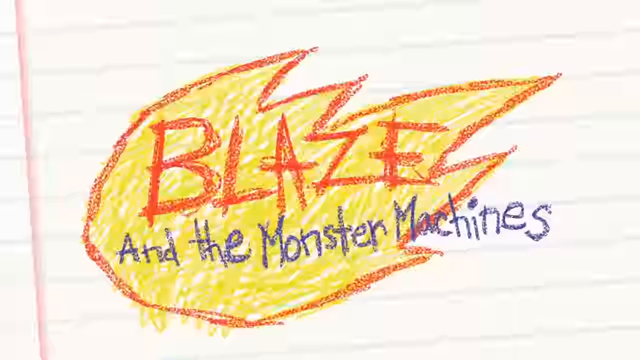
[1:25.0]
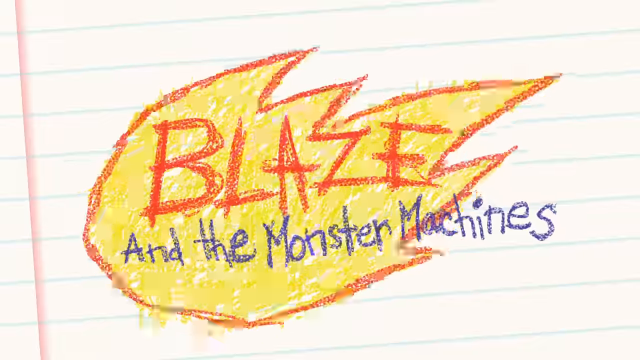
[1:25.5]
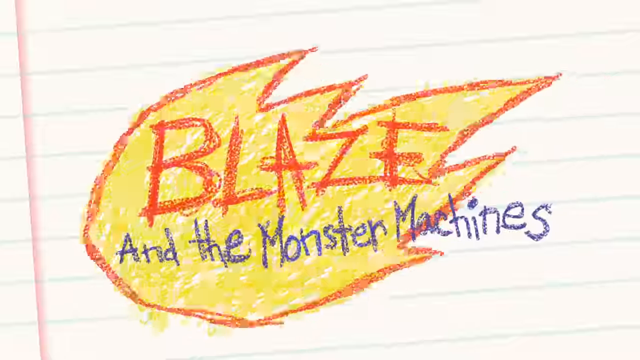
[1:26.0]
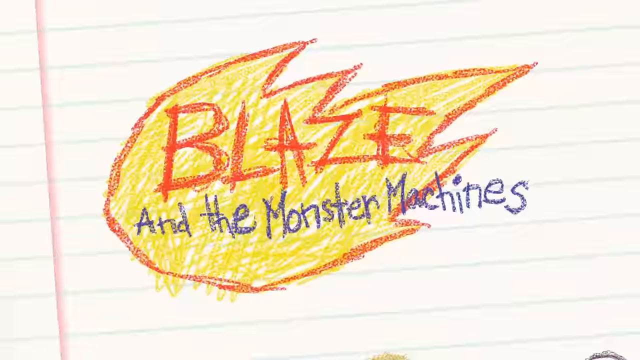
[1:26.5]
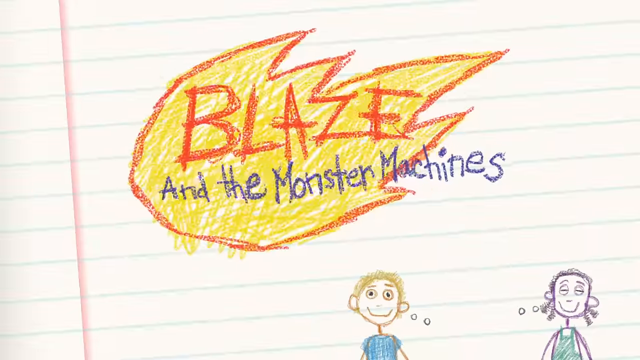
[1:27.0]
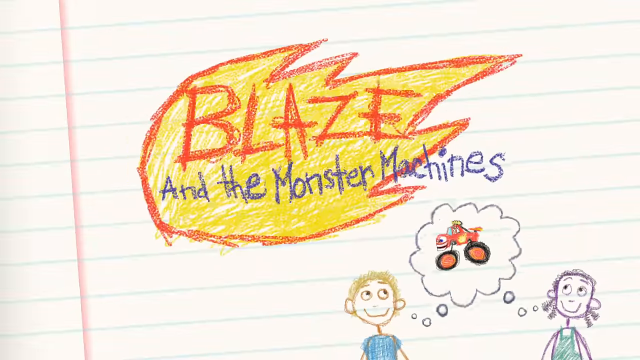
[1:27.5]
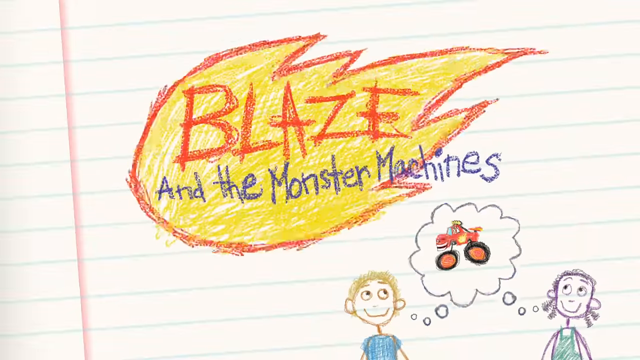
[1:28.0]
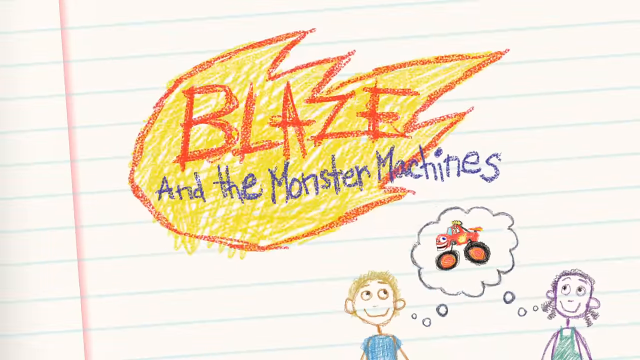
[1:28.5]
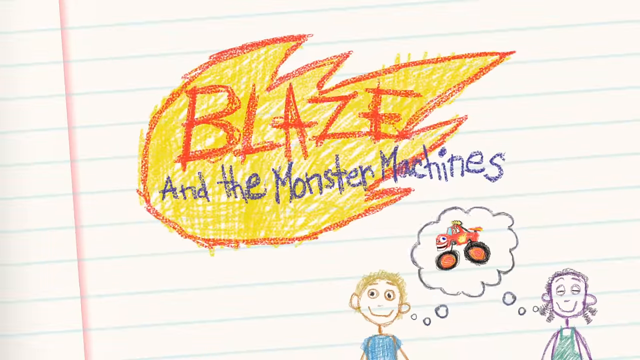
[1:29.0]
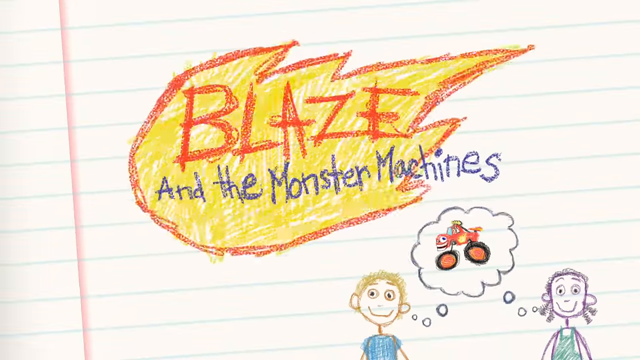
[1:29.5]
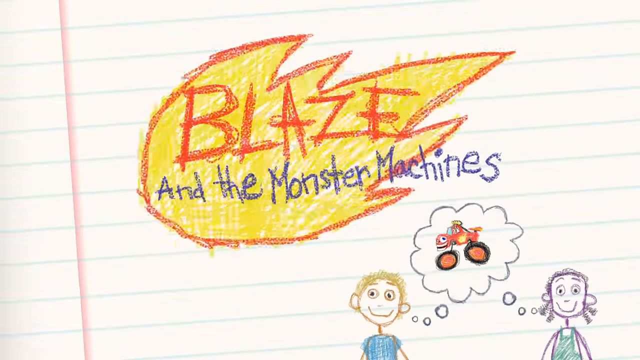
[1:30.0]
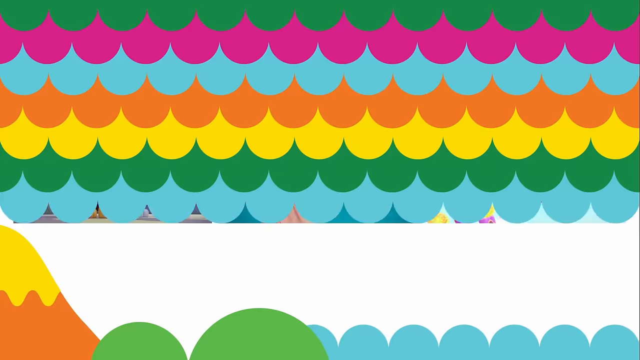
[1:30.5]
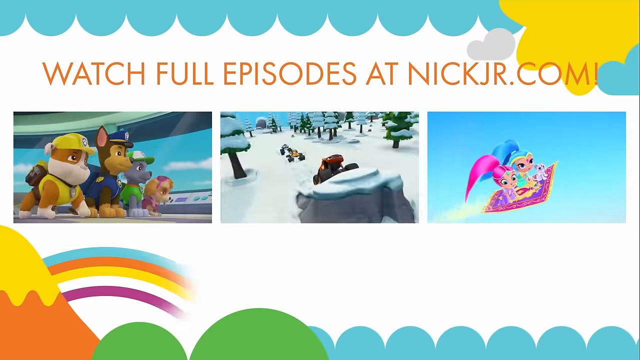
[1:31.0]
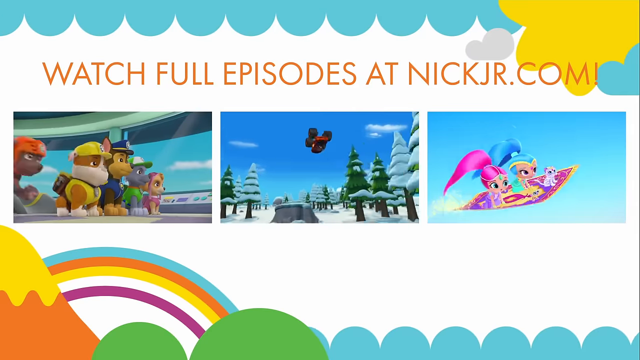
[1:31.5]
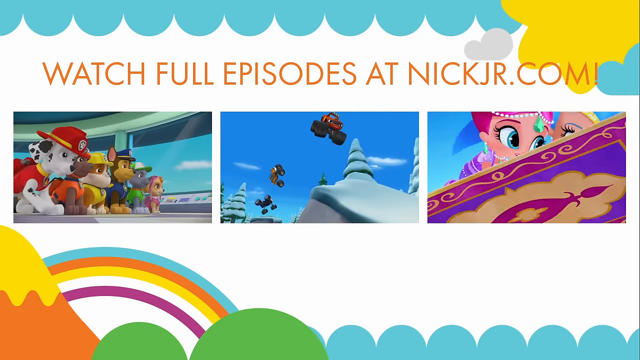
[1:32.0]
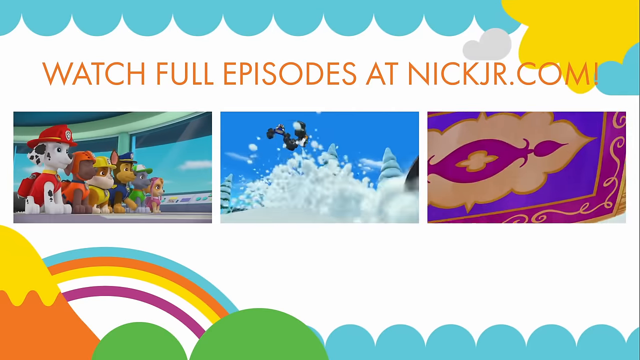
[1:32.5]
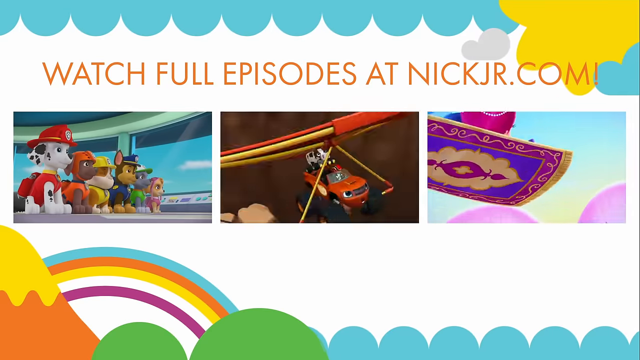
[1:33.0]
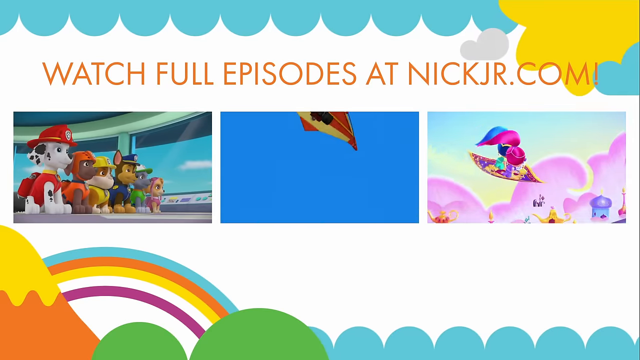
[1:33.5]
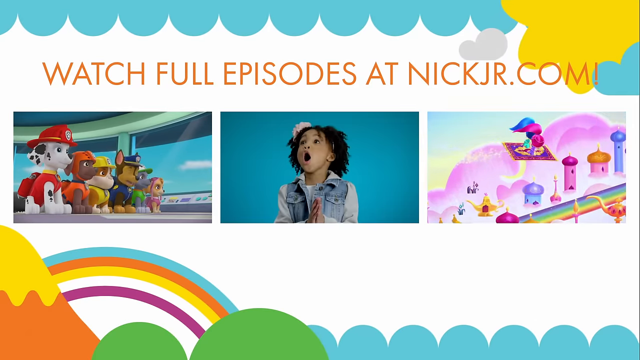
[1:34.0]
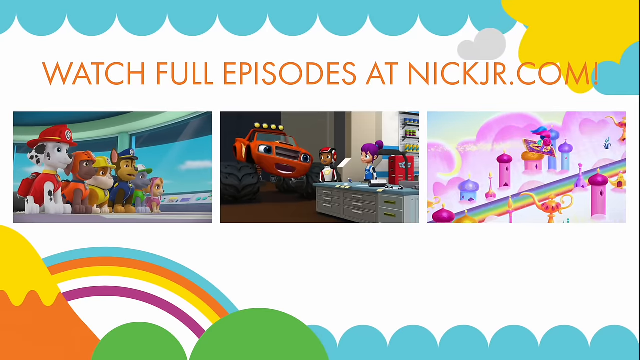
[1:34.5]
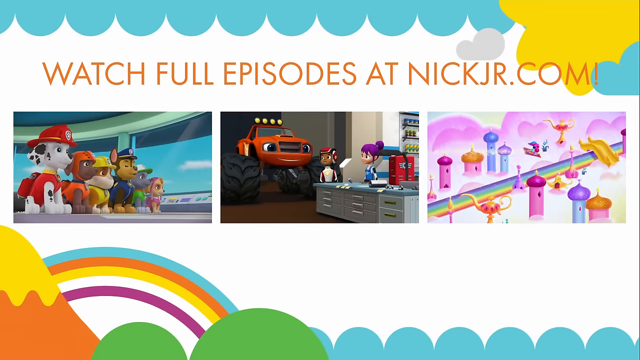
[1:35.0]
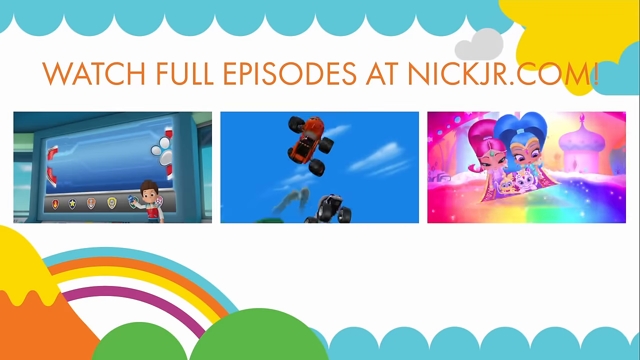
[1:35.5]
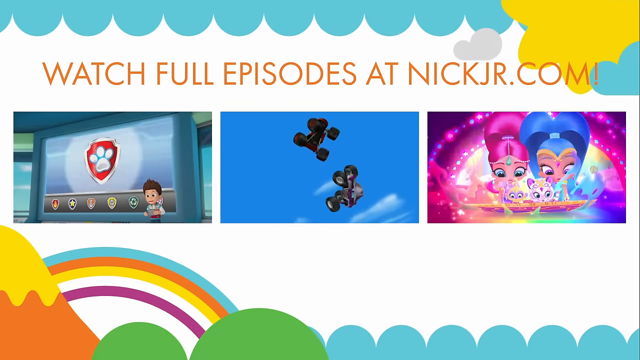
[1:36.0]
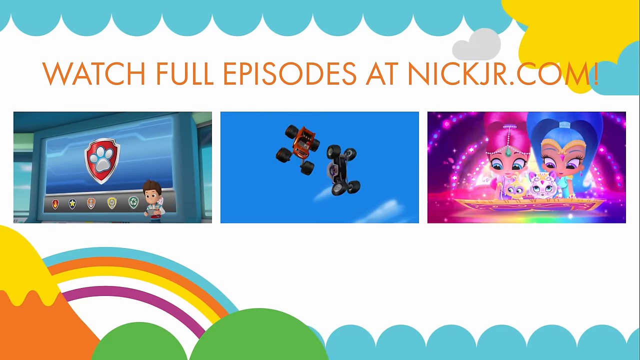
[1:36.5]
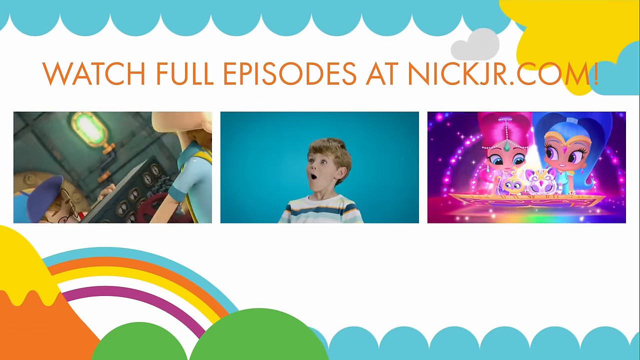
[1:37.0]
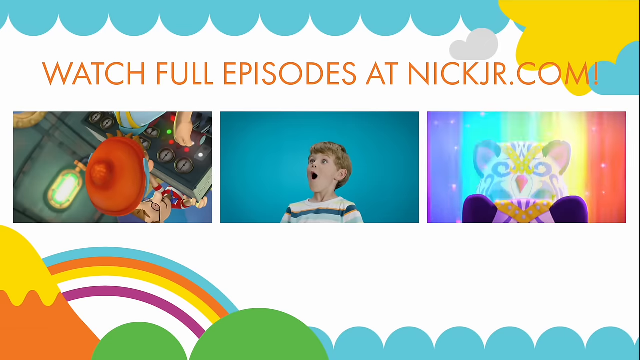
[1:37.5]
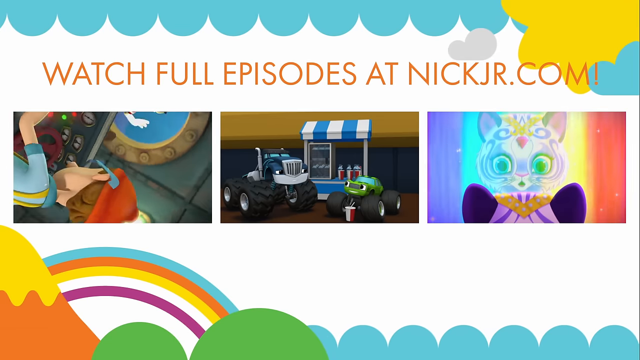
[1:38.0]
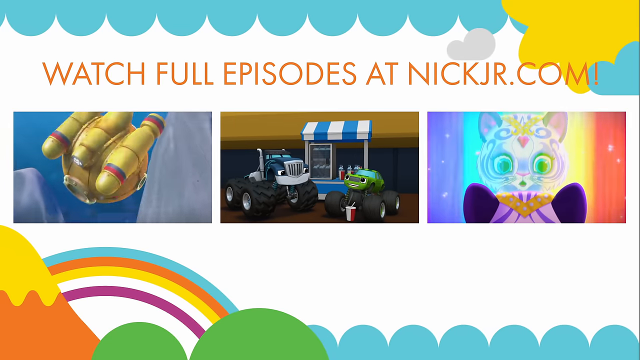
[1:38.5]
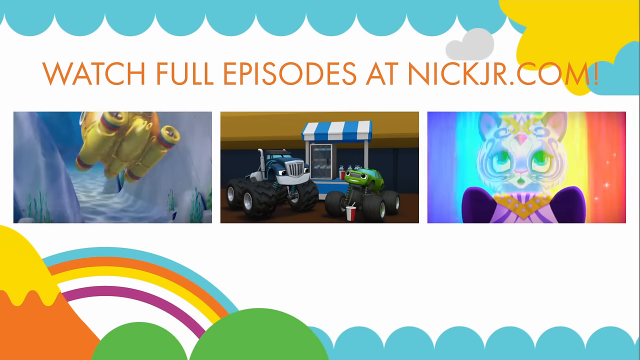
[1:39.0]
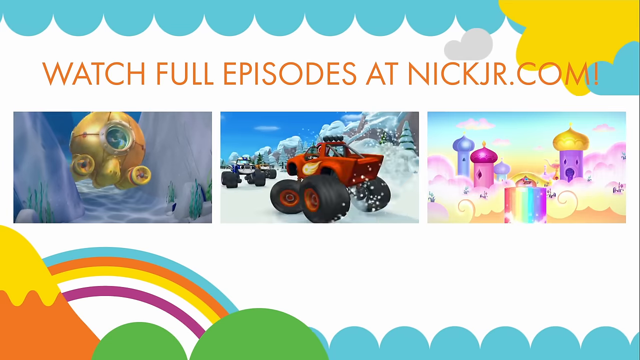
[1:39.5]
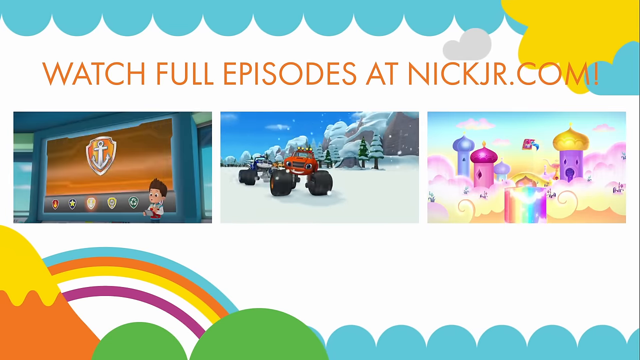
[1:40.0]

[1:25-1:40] Blaze and the Monster Machines is shown with a boy and a girl drawn in crayon at the bottom. Then different full episodes at nickjr.com are shown, with clips of the various shows available on the Nick Jr. platform. A little girl and a little boy seem to be watching the shows and appear amazed.